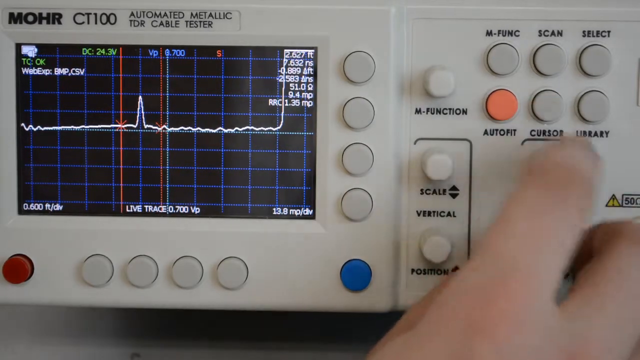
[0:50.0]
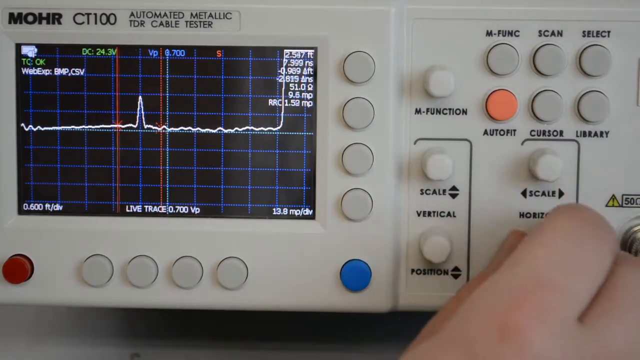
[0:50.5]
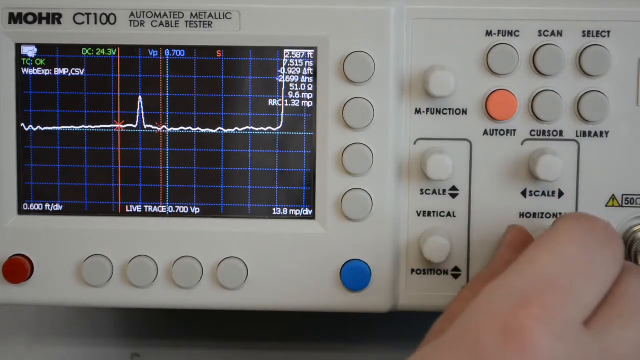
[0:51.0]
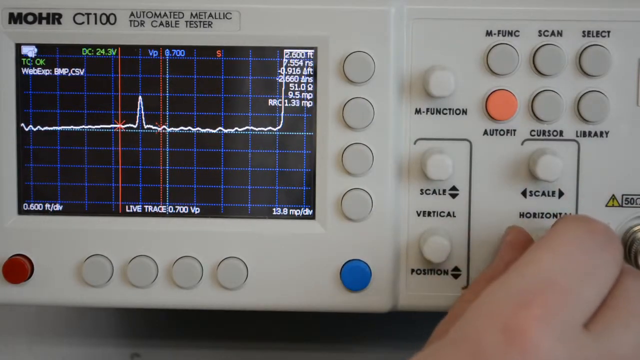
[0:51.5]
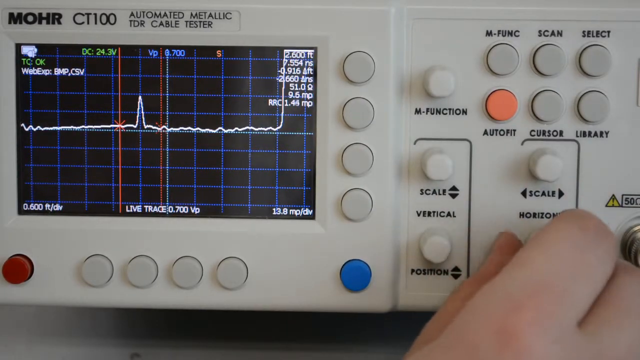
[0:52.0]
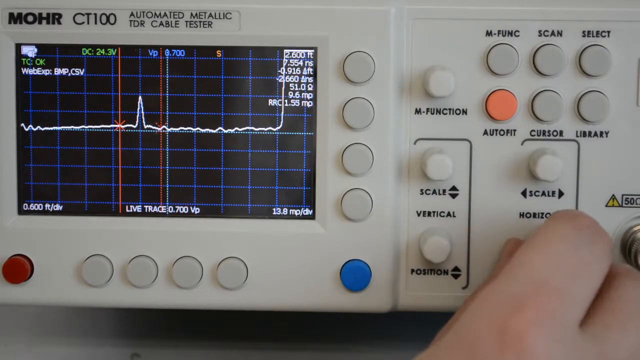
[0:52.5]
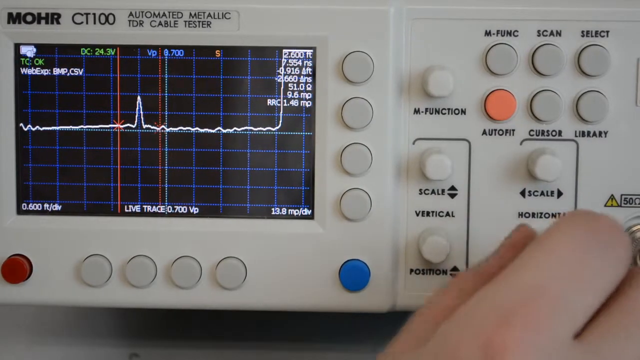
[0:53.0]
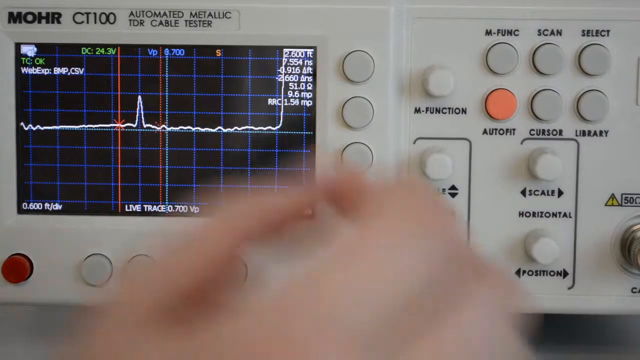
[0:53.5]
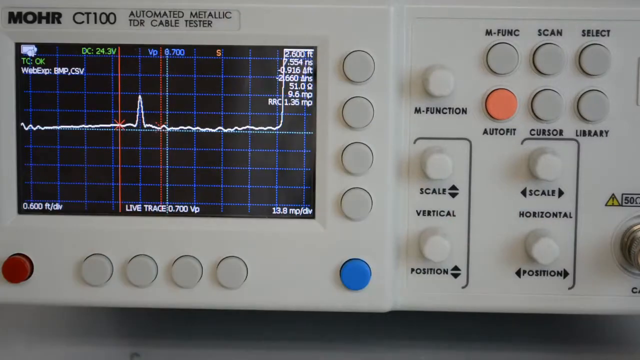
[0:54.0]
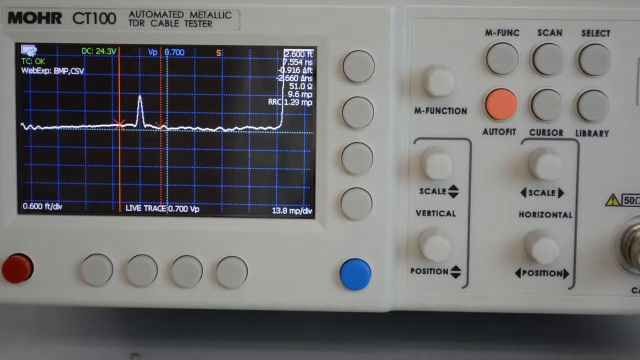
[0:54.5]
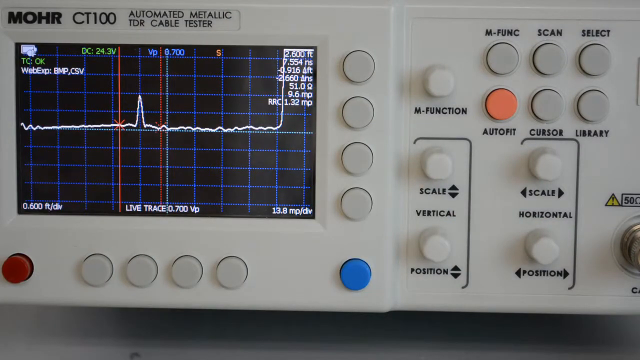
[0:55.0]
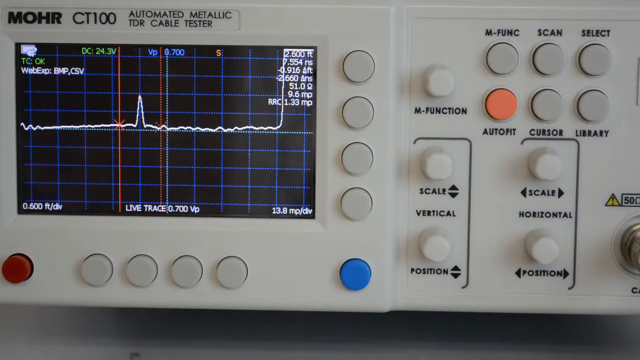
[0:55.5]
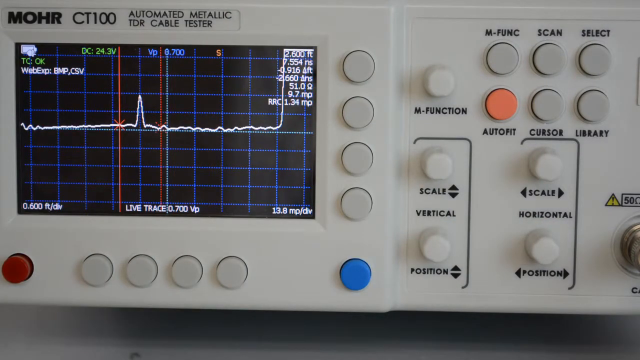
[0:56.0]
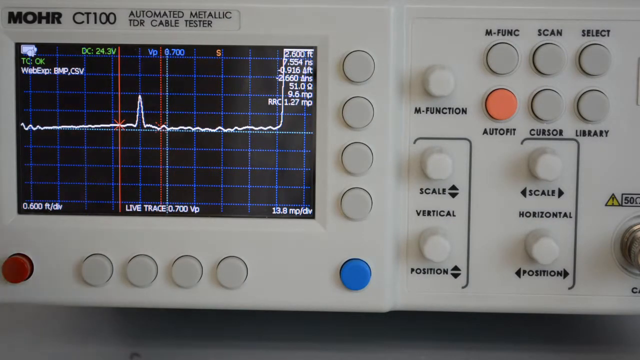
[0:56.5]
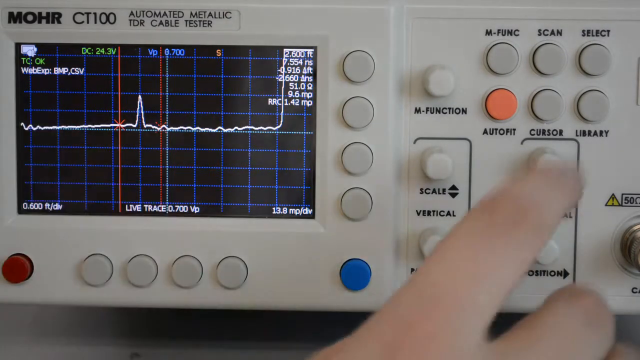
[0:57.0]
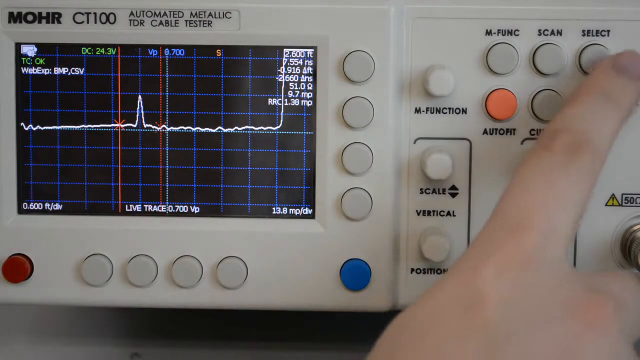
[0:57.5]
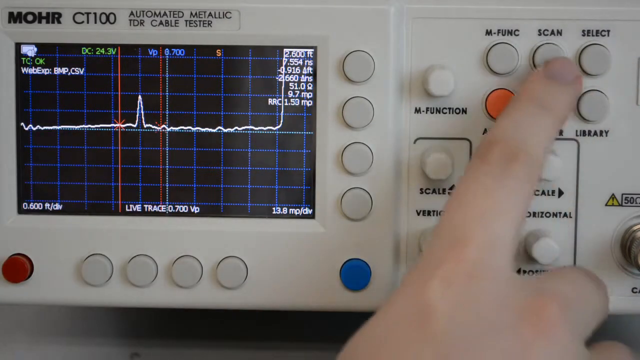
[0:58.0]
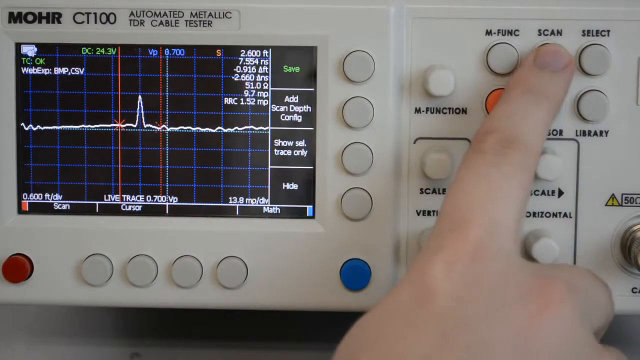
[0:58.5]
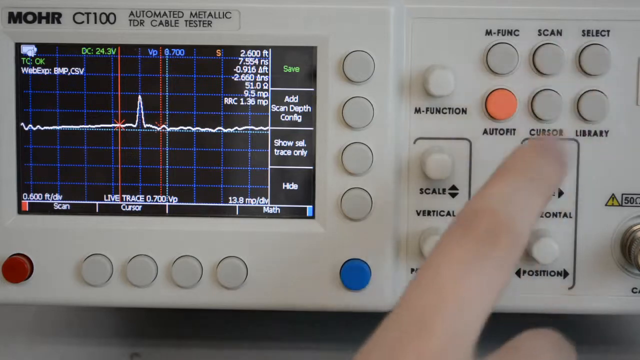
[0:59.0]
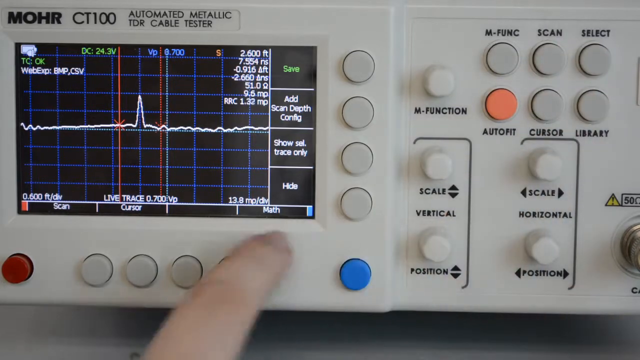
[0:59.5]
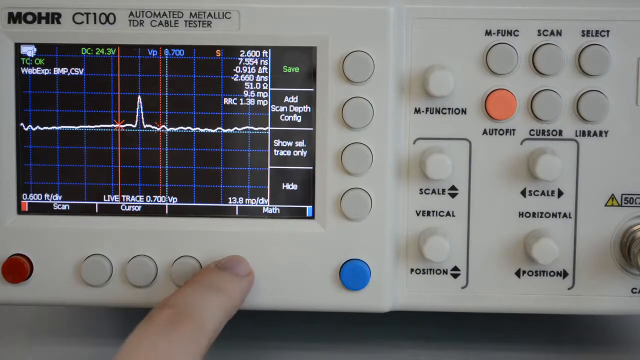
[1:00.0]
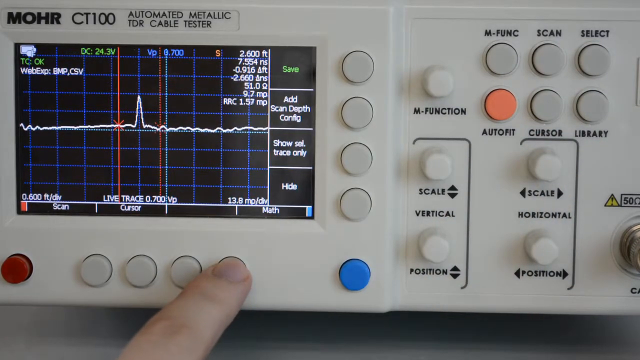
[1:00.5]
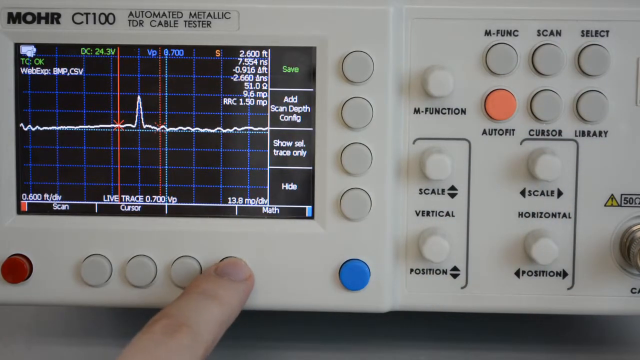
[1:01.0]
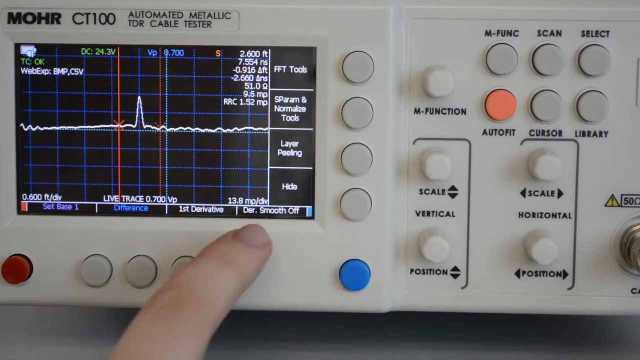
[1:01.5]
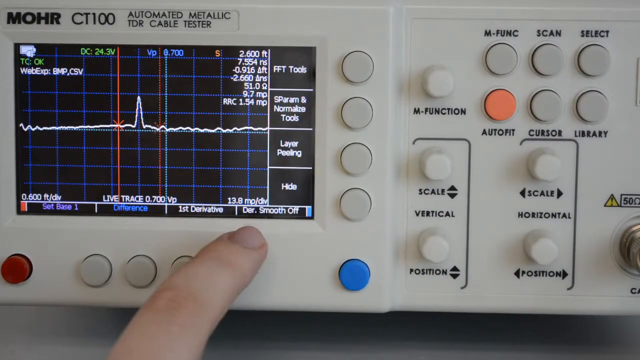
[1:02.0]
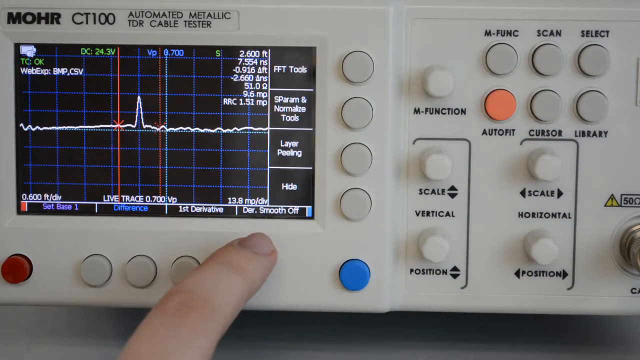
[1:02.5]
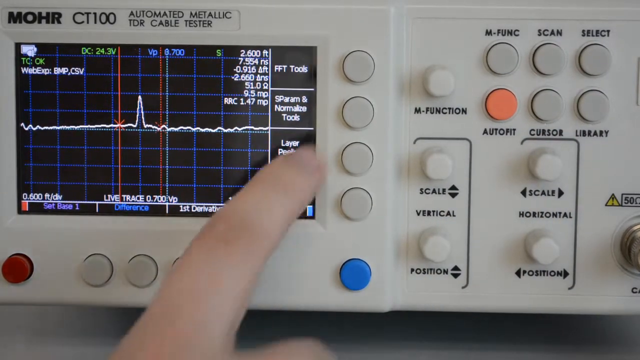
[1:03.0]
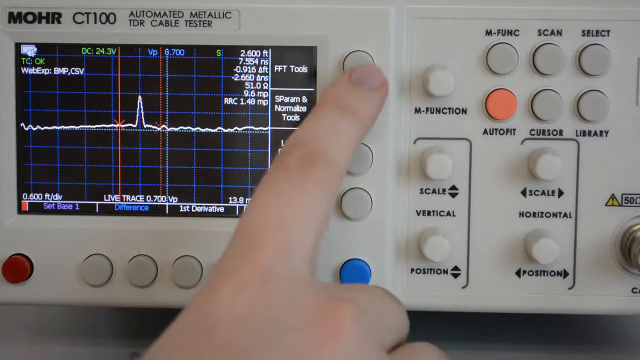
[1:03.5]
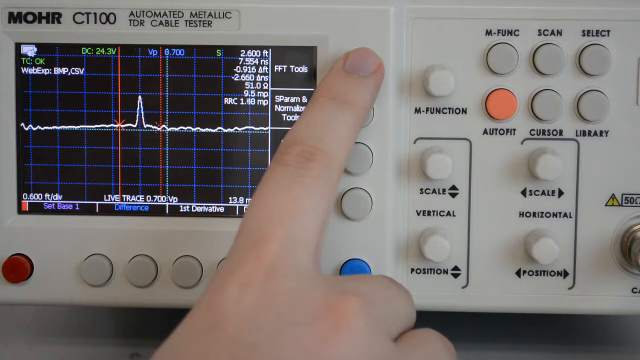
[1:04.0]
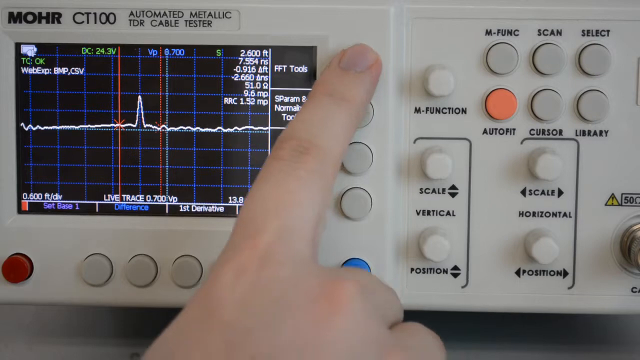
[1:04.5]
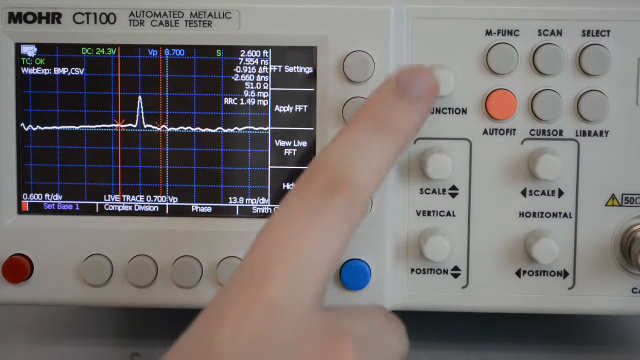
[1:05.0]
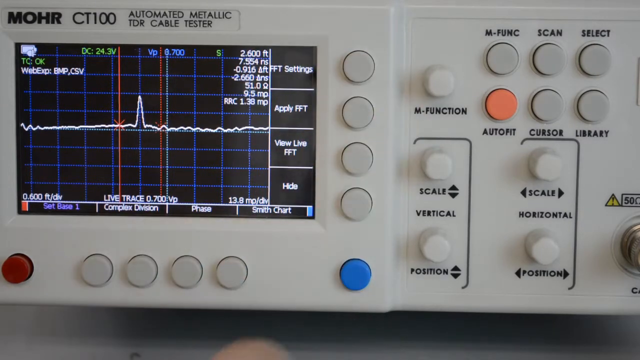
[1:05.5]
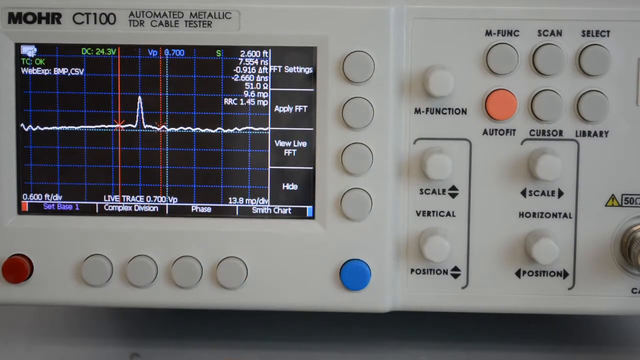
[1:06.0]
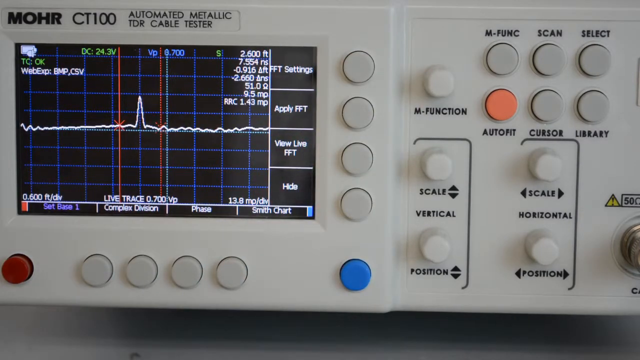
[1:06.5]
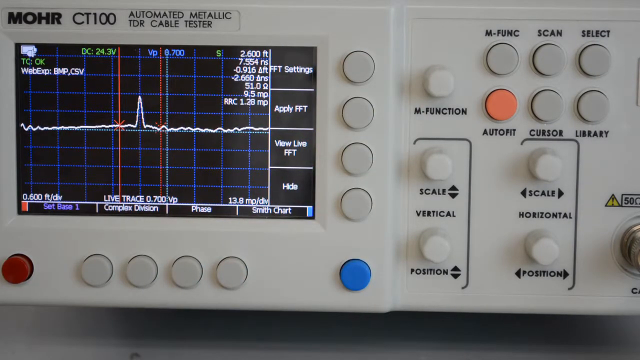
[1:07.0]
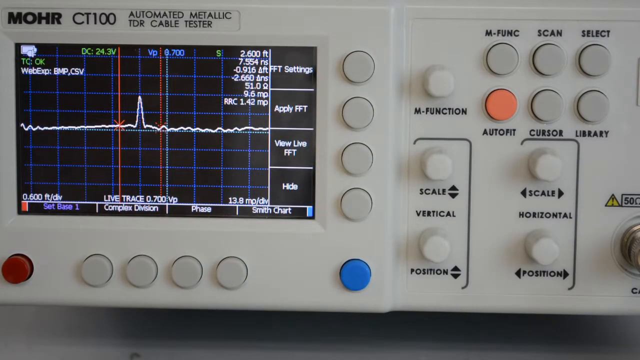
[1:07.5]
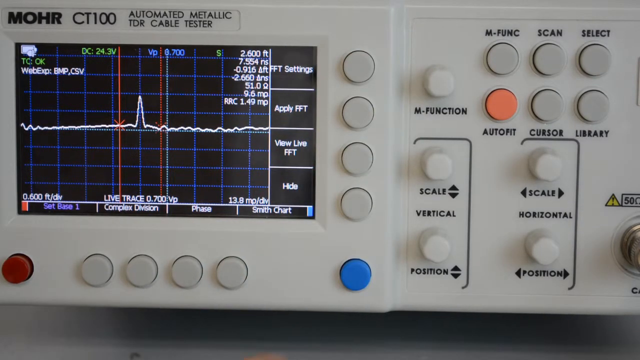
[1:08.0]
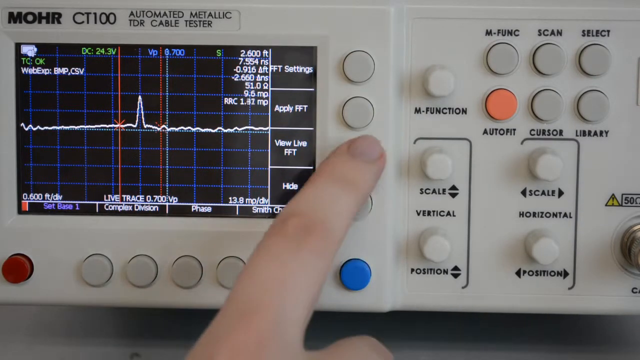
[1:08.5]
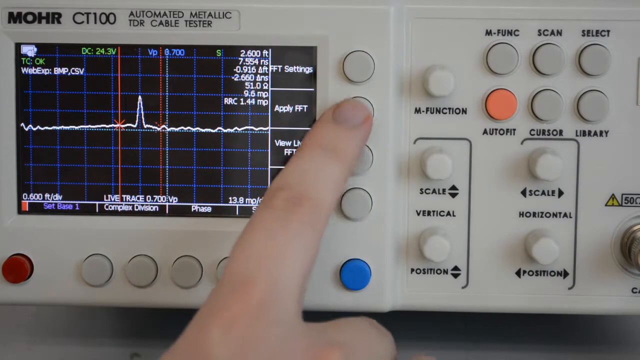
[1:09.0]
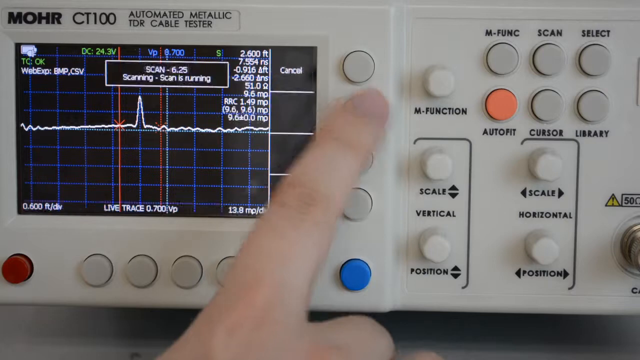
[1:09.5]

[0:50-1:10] The index and middle fingers of a right hand are visible in the bottom right corner, with a finger directly under the cursor and library buttons on the upper right corner of the device. The person moves their index finger down with the thumb and uses the position knob again, gripping it between the two fingers and slightly moving and jiggling it for a few seconds. They then raise the hand and move it from the bottom right corner over to the left side of the screen, out of view. The graph and grid on the device's screen keep going. After a few seconds the hand comes back in: the index finger presses the library button, moves up and presses the scan button, then goes back down beneath the screen and presses one of the gray unlabeled buttons under it, changing the mode and display image.